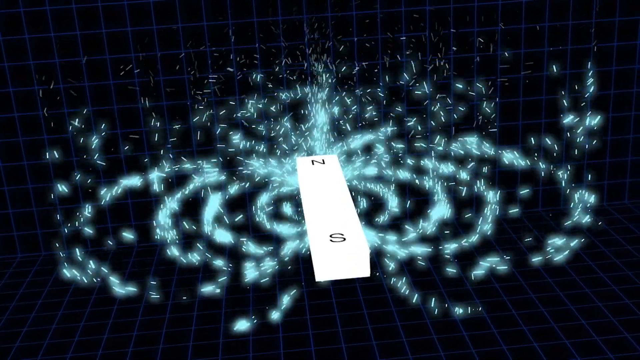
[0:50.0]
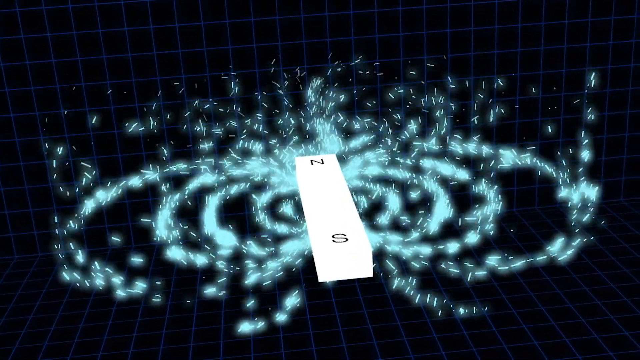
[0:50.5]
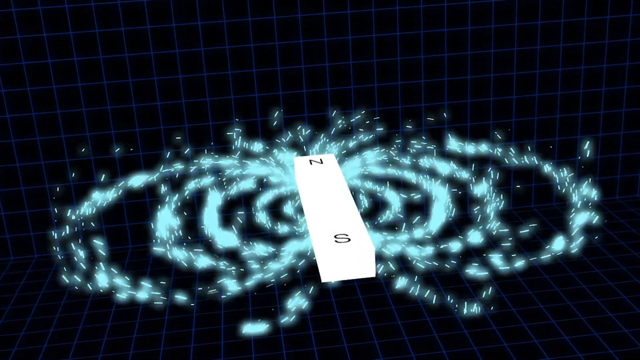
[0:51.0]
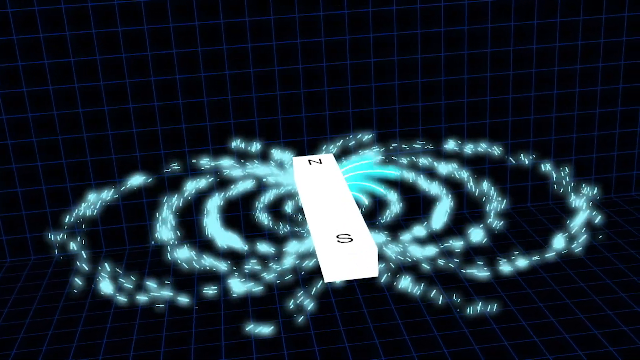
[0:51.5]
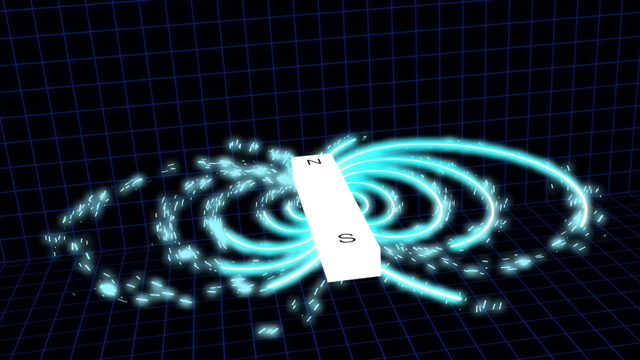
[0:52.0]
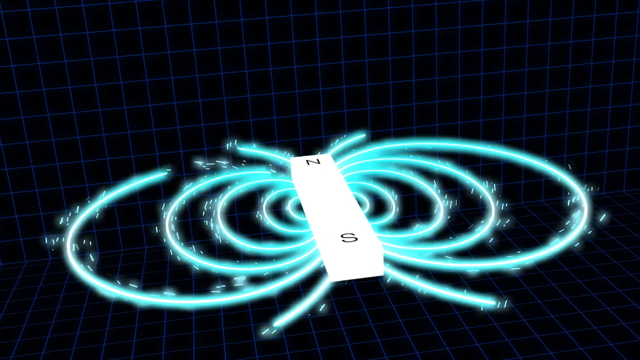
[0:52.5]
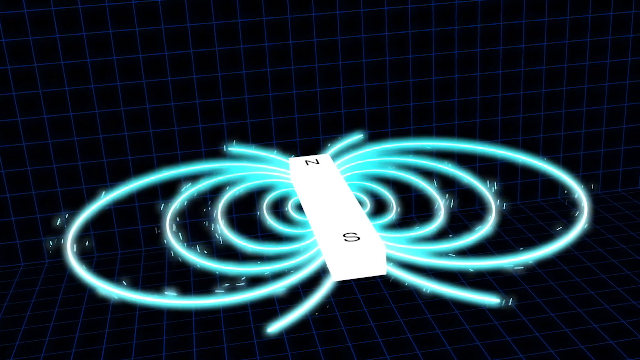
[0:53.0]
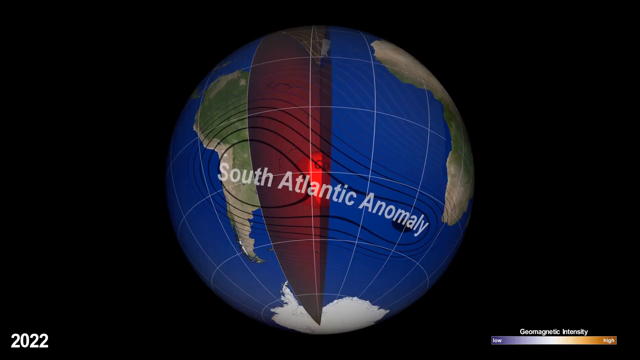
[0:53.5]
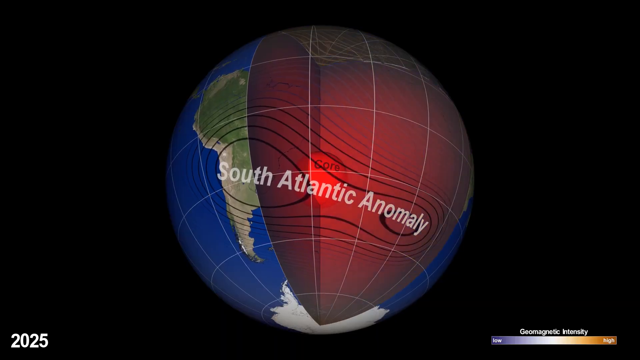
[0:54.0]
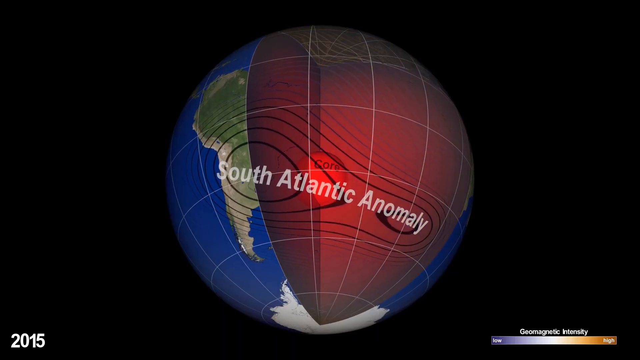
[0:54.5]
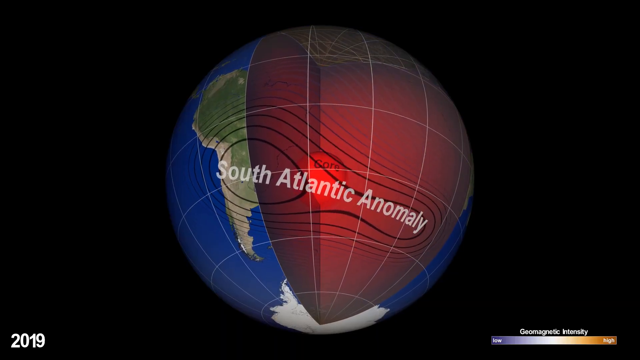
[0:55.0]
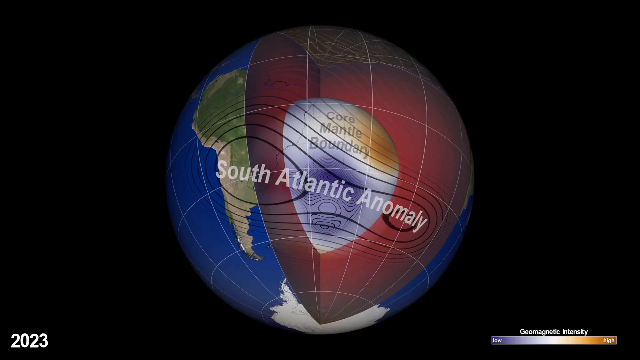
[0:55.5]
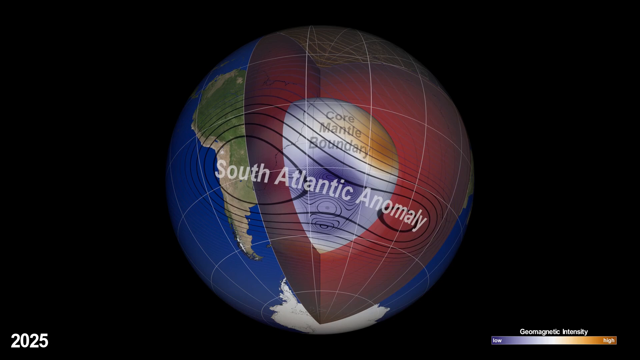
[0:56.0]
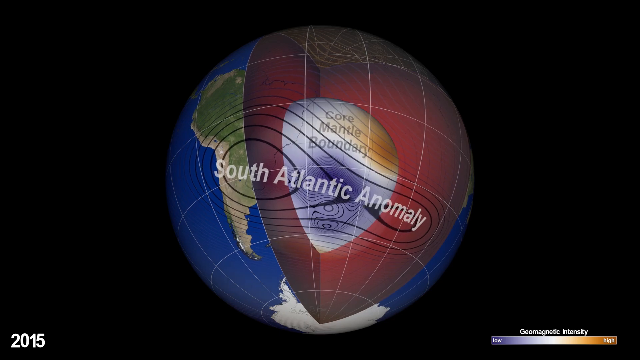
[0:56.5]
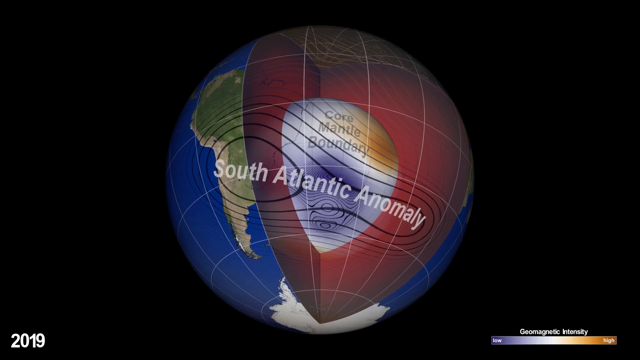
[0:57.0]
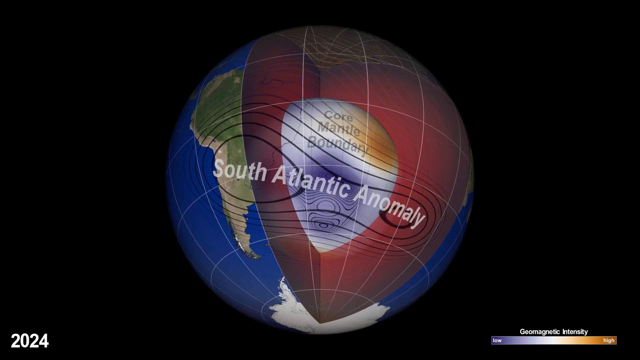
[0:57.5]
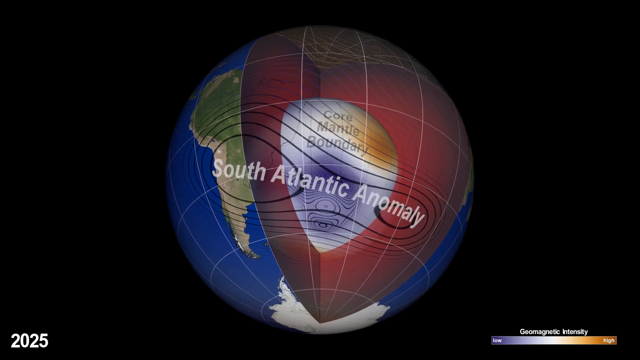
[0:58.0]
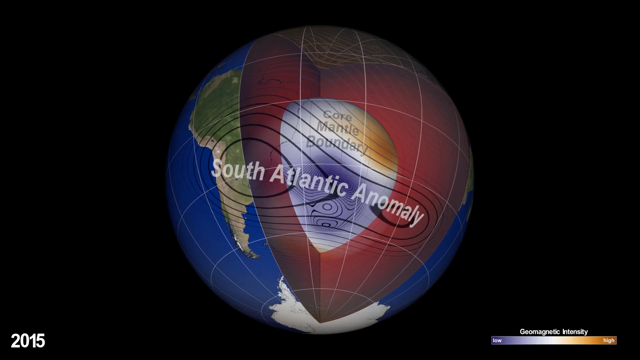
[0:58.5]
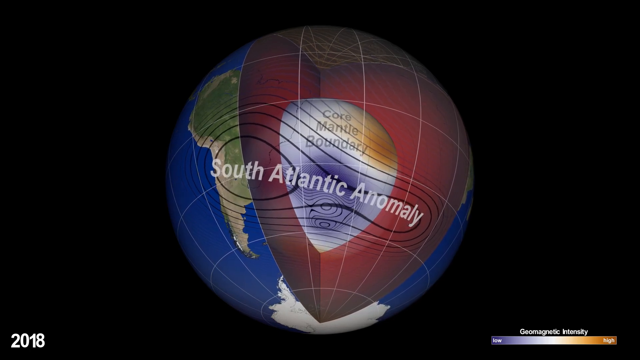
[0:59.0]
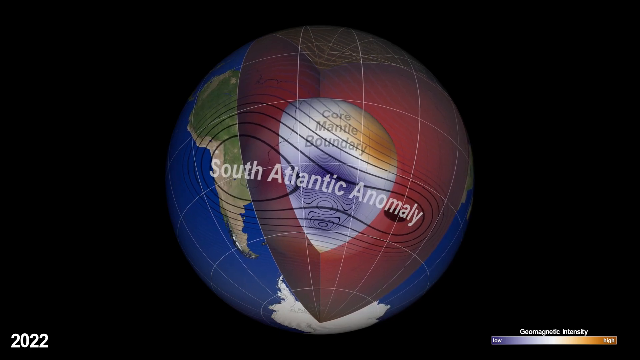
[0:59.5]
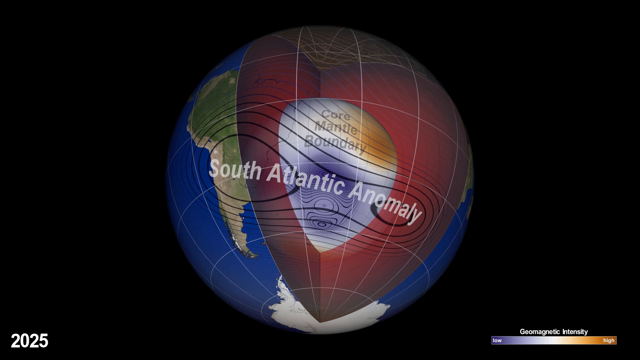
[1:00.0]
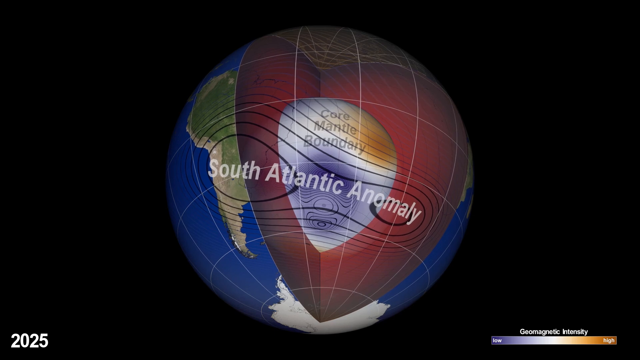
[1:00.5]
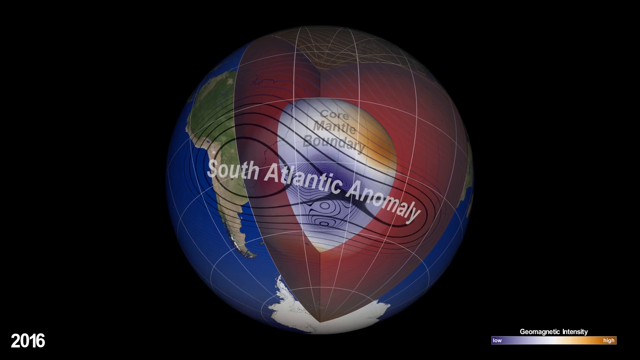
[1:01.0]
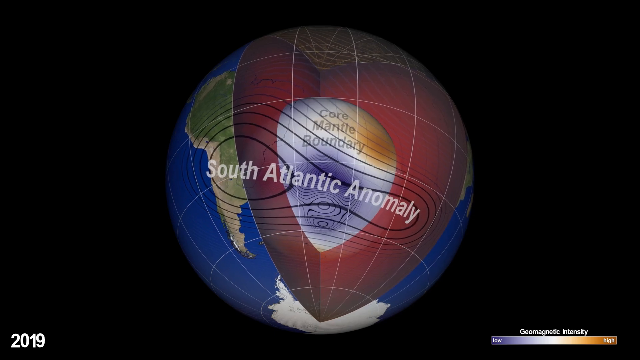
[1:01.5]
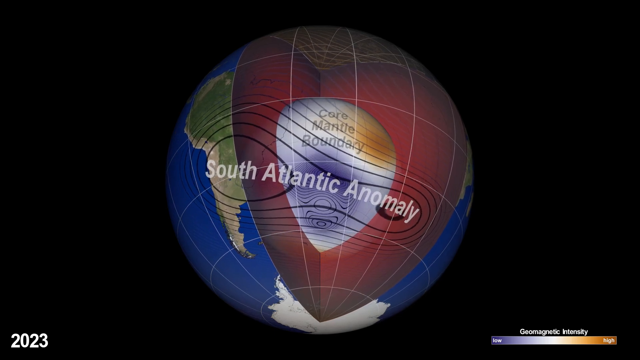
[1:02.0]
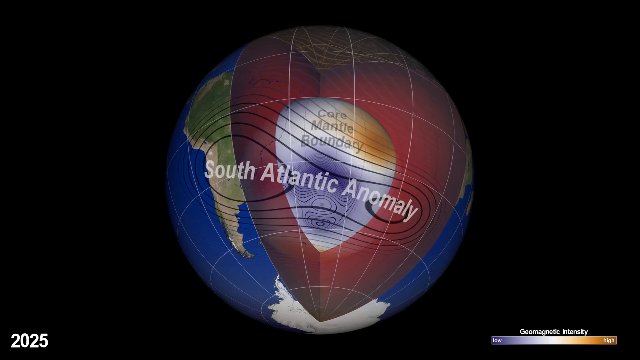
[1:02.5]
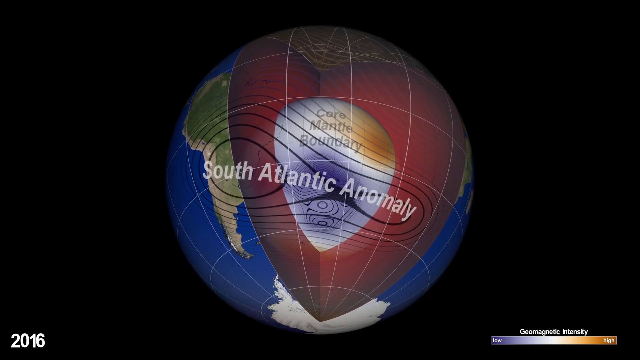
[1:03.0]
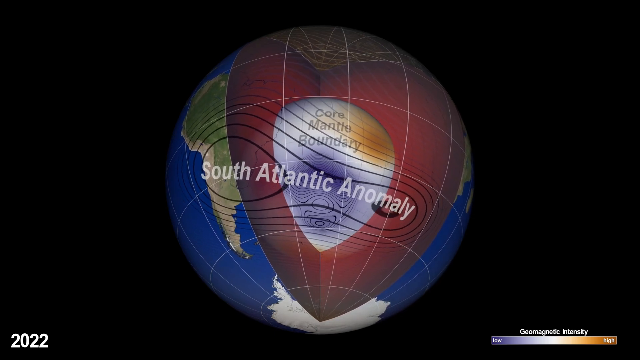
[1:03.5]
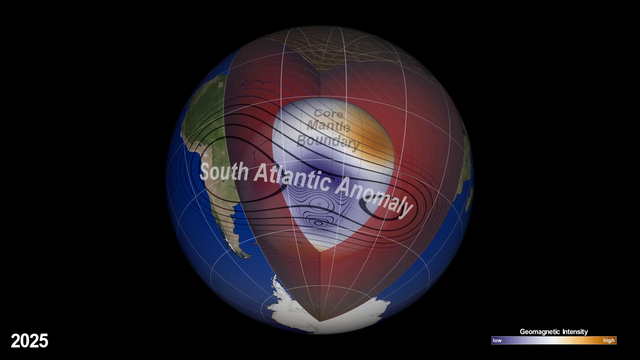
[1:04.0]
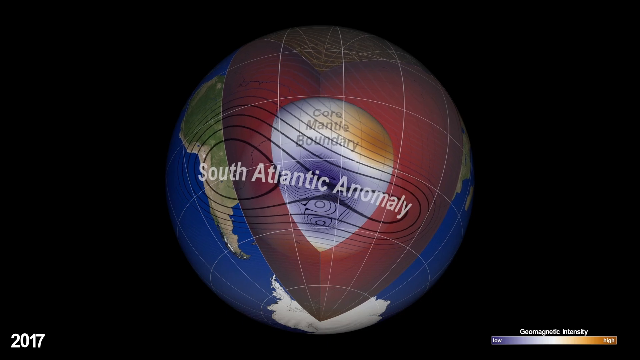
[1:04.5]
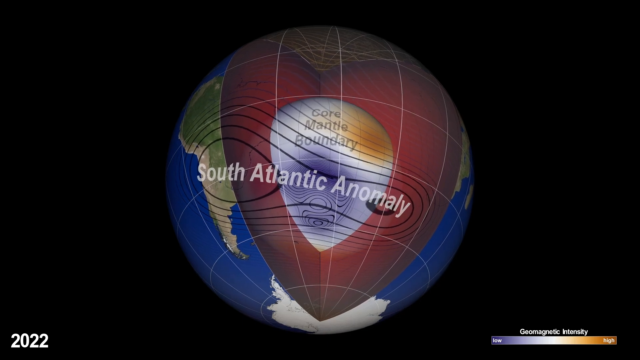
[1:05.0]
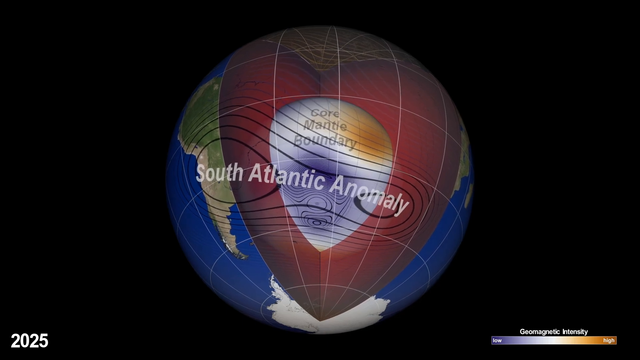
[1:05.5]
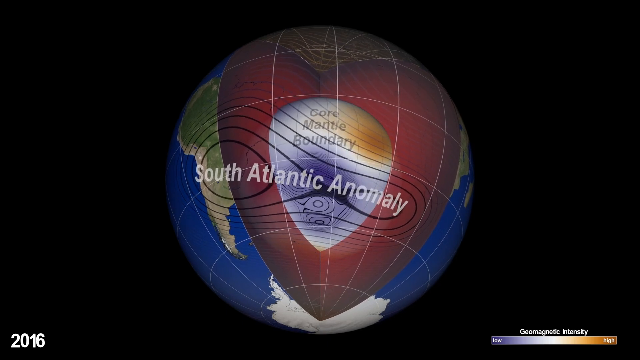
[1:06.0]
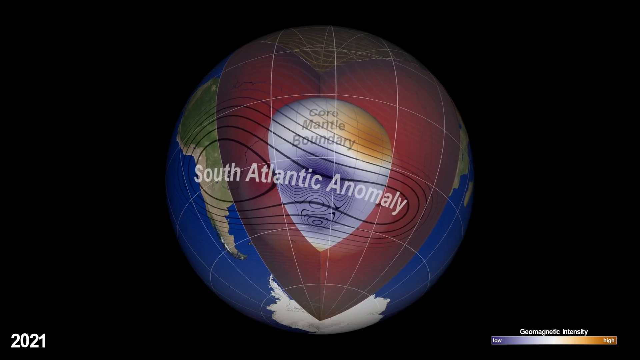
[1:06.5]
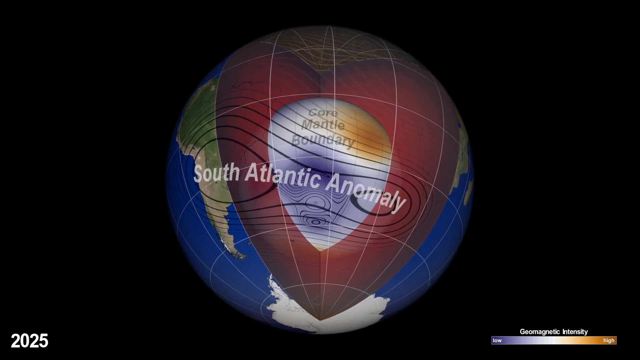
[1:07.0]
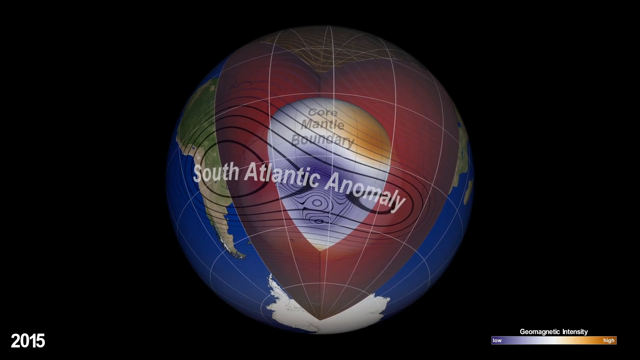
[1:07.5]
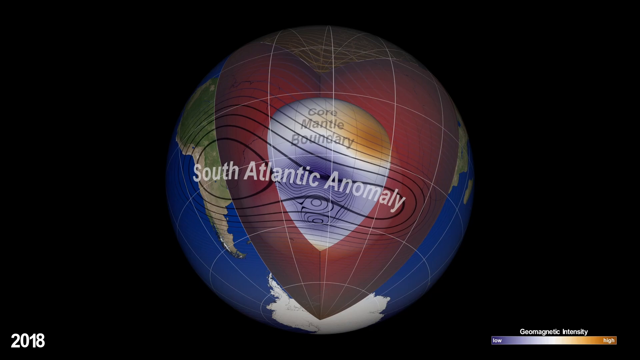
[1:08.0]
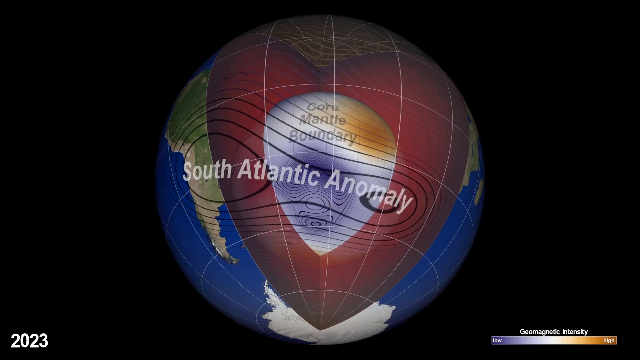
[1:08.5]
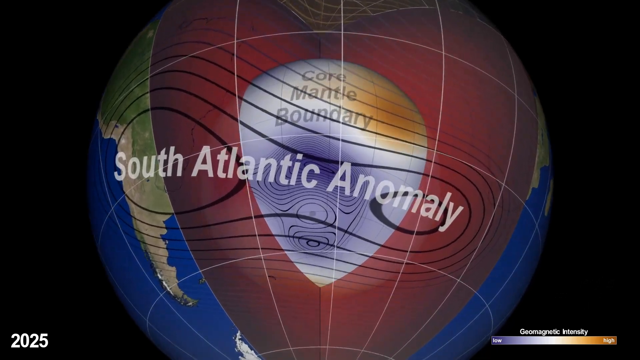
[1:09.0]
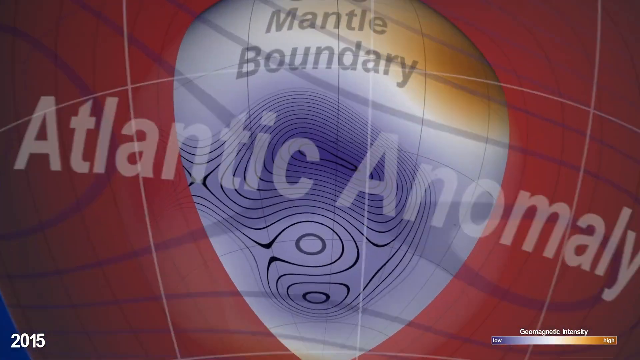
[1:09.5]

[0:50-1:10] A white-silver rectangular magnet labeled "N" and "S" on either end shows how a magnetic field forms, with small light blue particles flying around it, revealing the patterns of the magnetic field. Next, an image of Earth is focused over South America and Antarctica, with the words "South Atlantic Anomaly" over South America surrounded by a number of wavy black lines. A section of Earth is sliced out to show a dark red area inside, with a small portion in the very middle labeled "core". Next, a layer in gray, slightly larger than the last, appears on top of it, labeled "core-mantle boundary". The black wavy lines move slightly as Earth continues to rotate slowly to the left. The video then zooms in on the area labeled "core-mantle boundary", with the black wavy lines moving as it zooms.